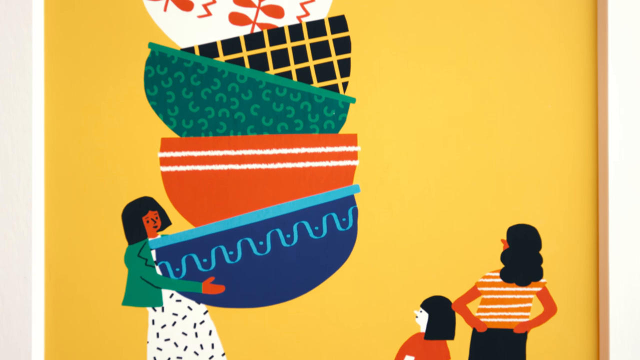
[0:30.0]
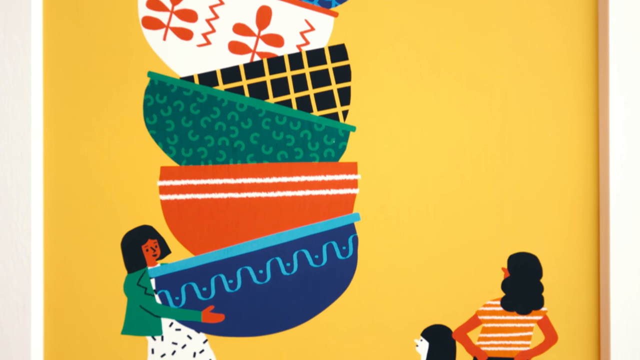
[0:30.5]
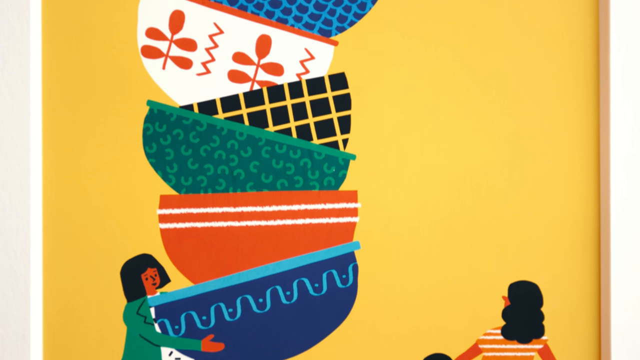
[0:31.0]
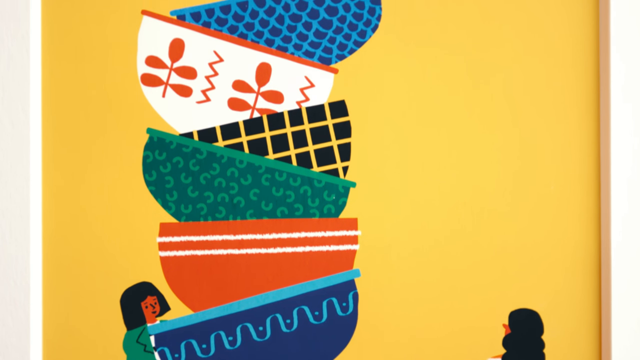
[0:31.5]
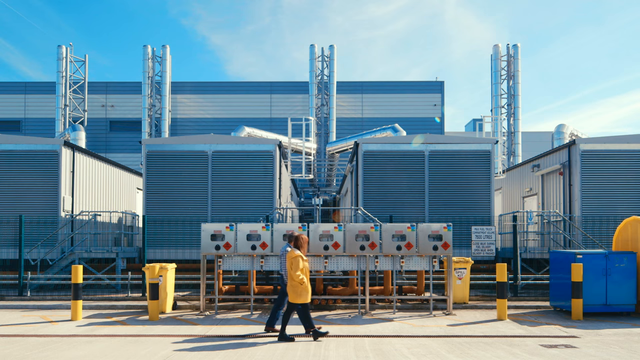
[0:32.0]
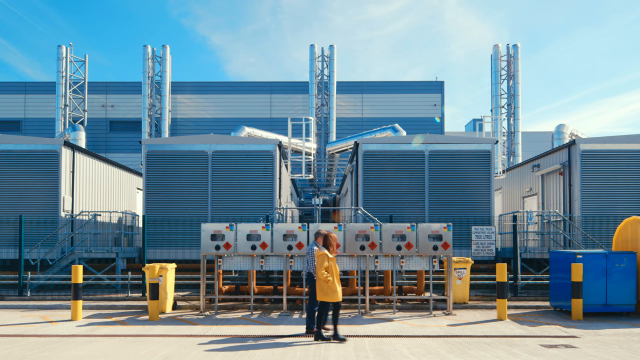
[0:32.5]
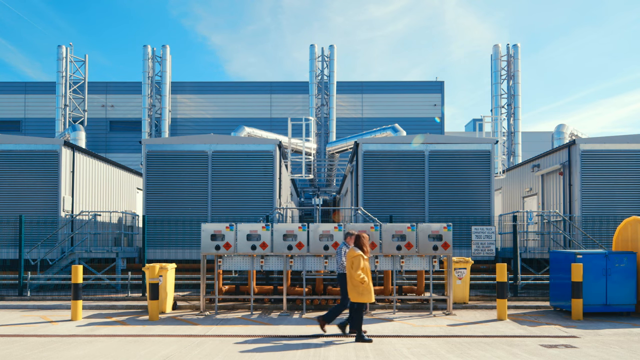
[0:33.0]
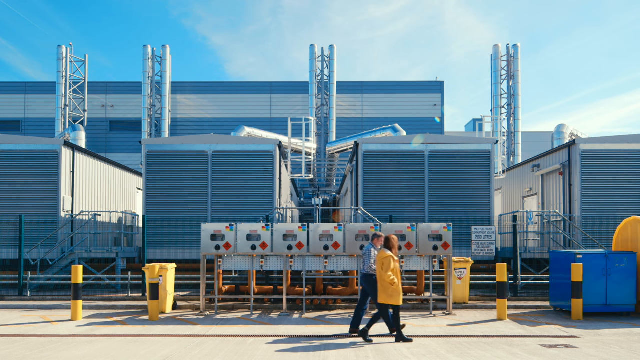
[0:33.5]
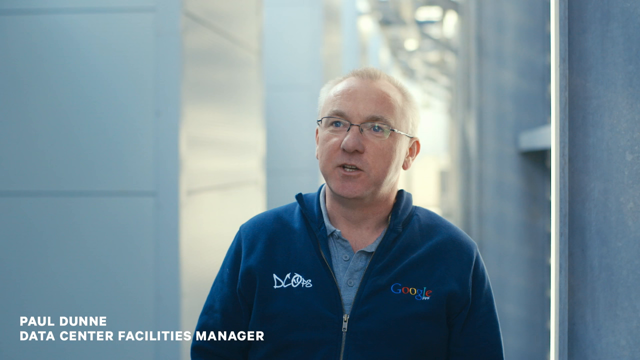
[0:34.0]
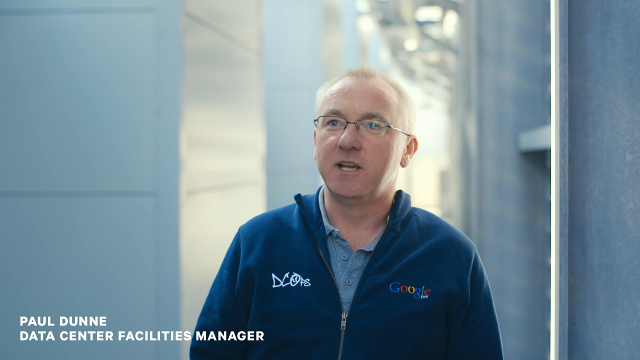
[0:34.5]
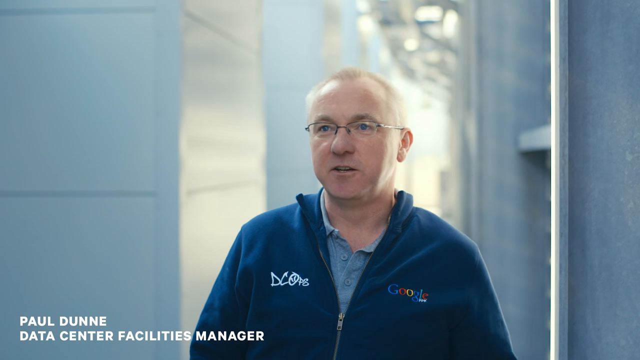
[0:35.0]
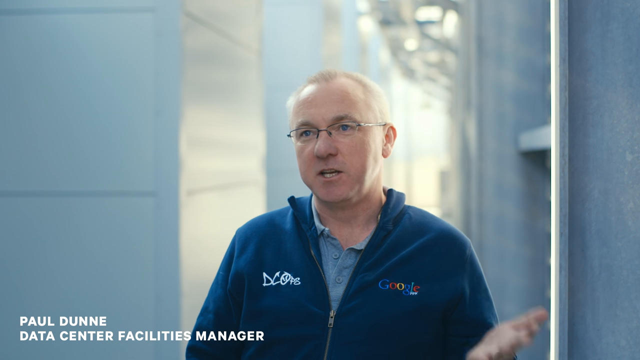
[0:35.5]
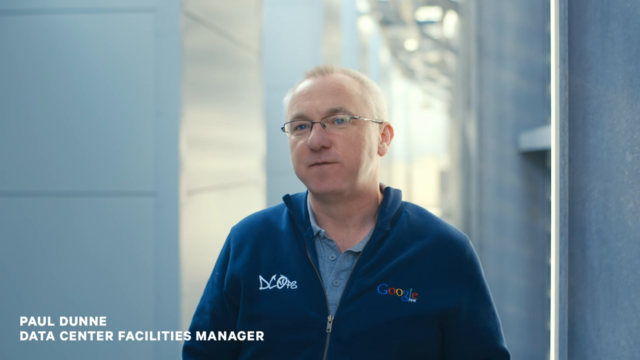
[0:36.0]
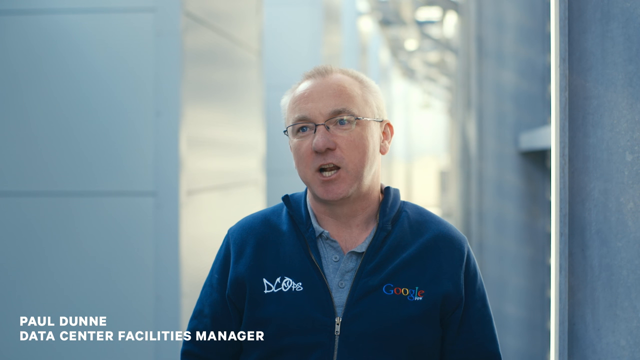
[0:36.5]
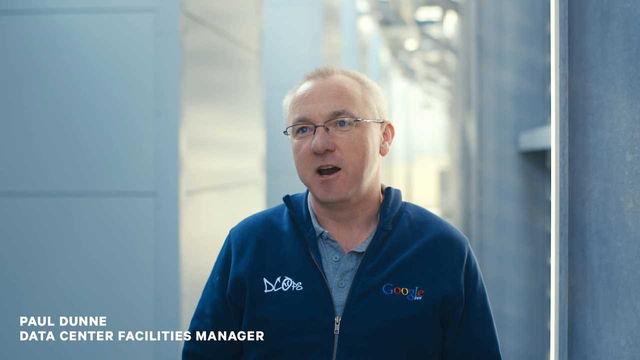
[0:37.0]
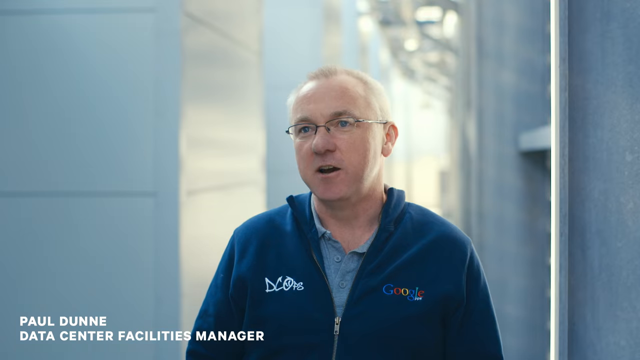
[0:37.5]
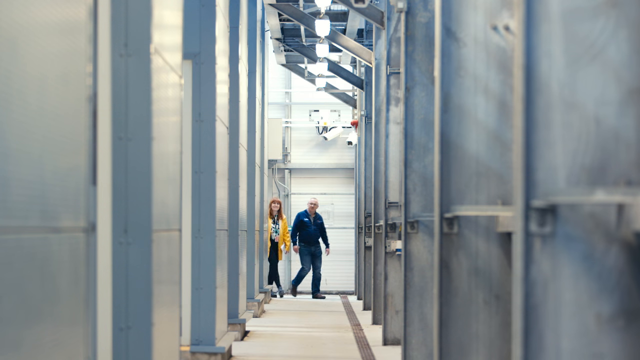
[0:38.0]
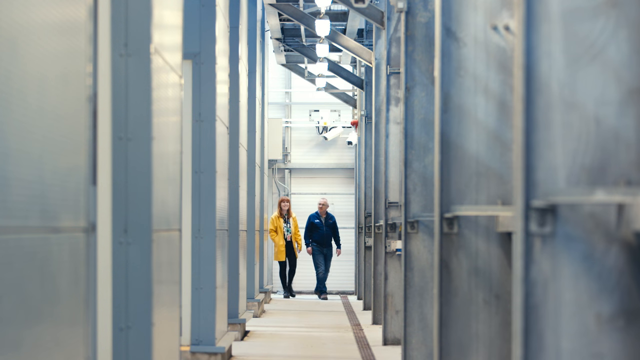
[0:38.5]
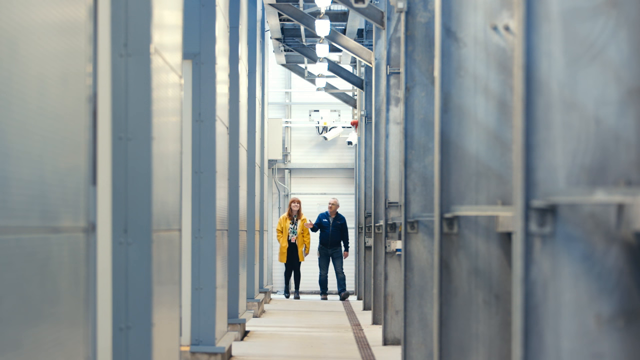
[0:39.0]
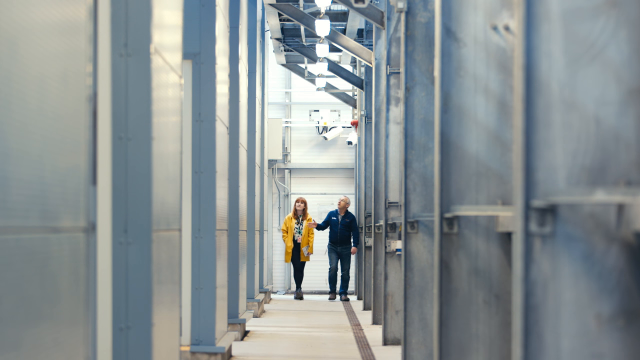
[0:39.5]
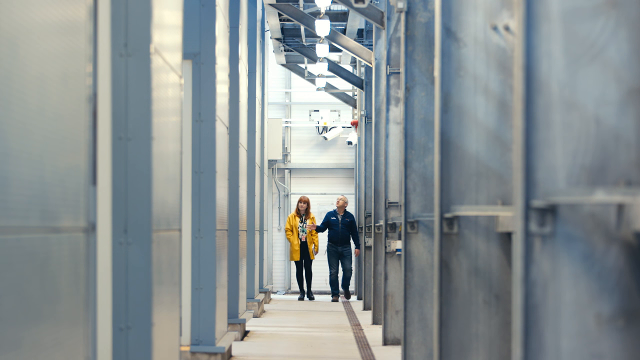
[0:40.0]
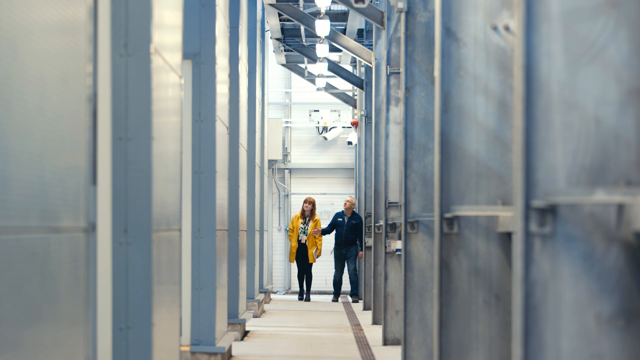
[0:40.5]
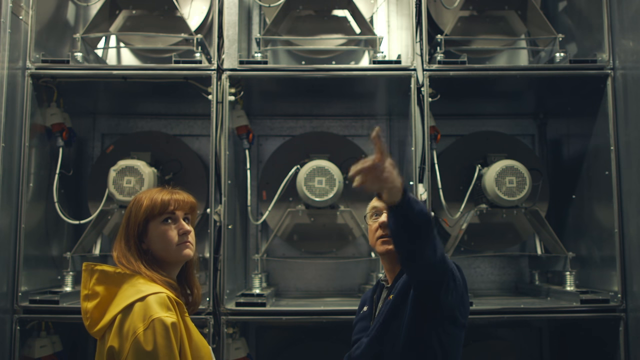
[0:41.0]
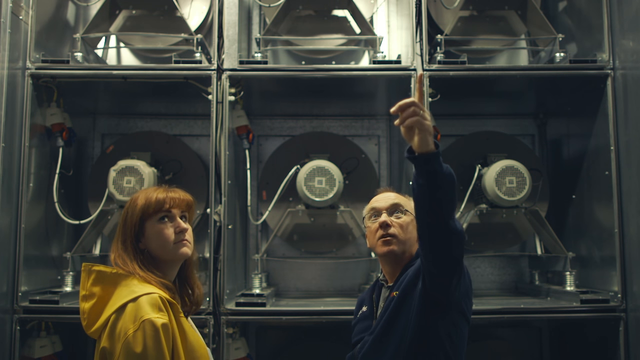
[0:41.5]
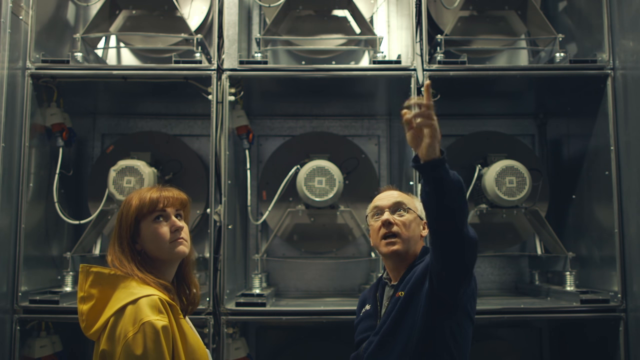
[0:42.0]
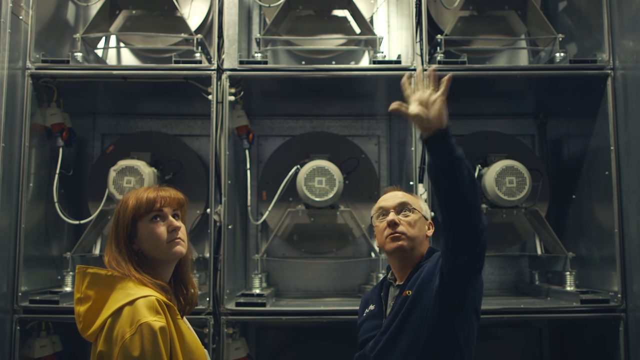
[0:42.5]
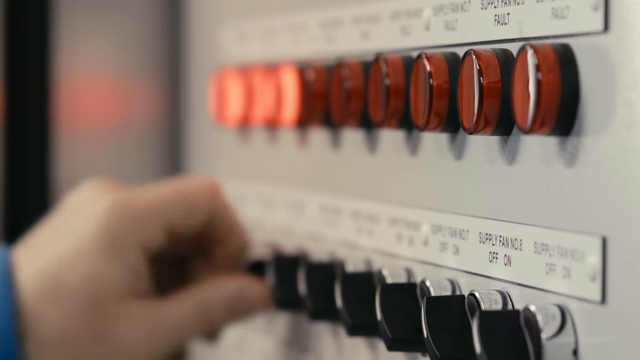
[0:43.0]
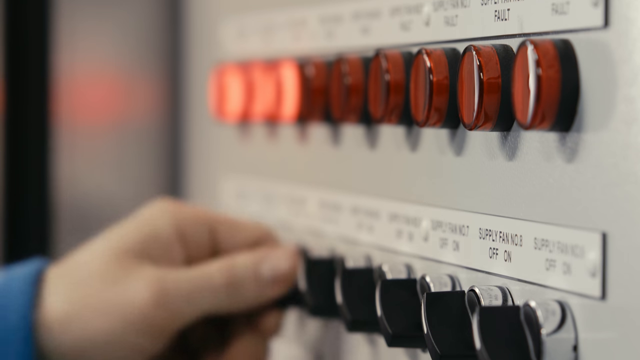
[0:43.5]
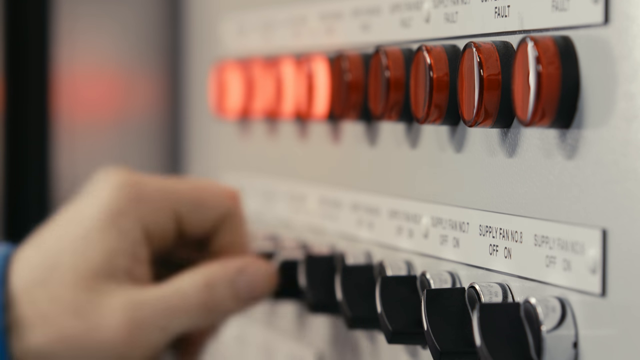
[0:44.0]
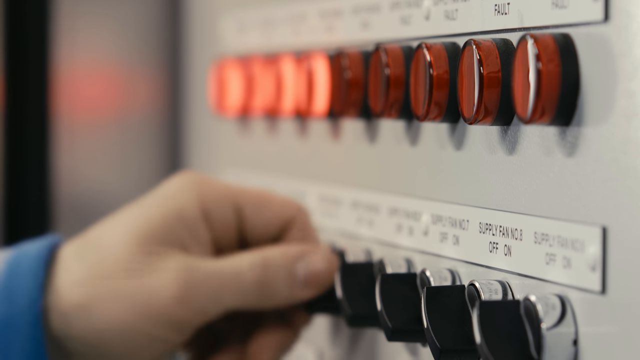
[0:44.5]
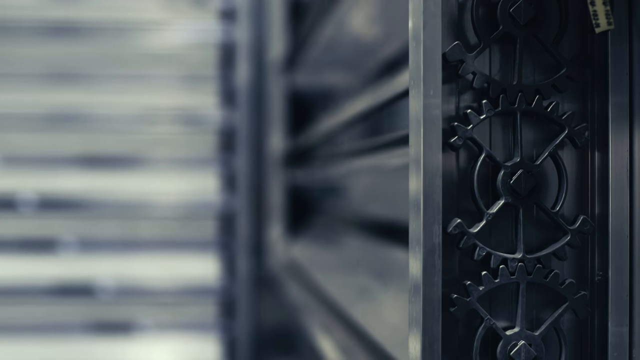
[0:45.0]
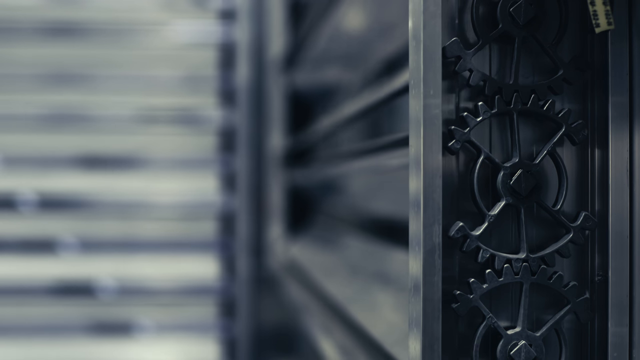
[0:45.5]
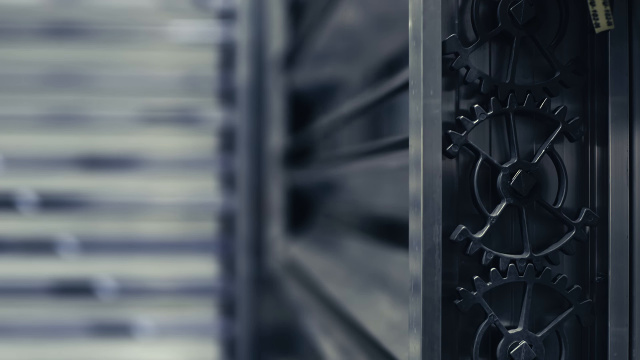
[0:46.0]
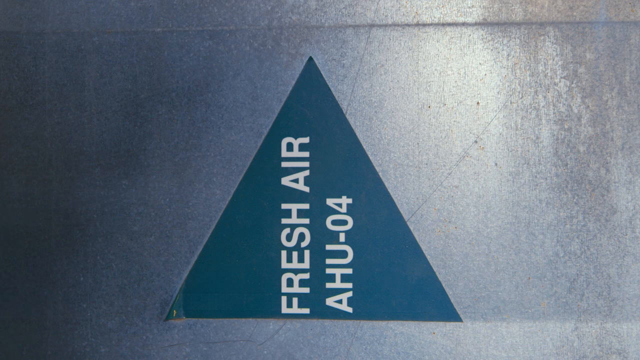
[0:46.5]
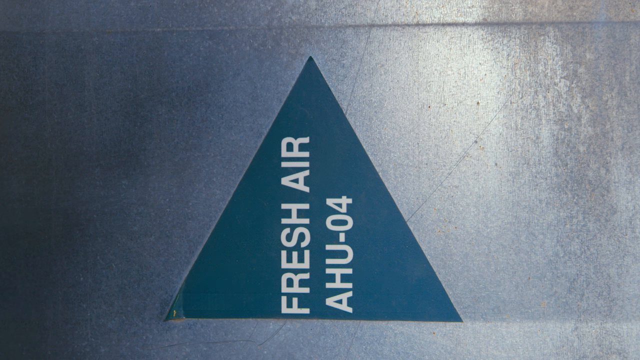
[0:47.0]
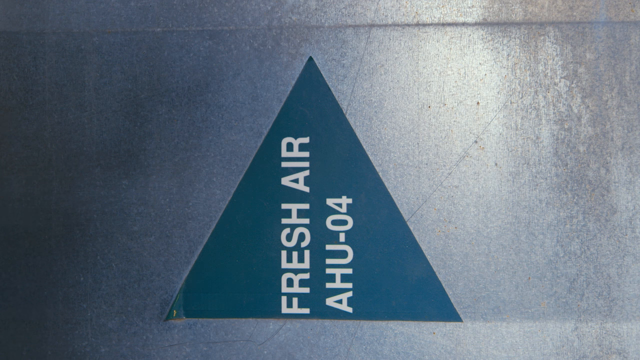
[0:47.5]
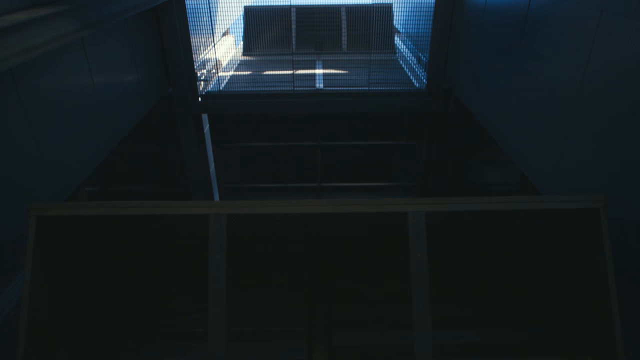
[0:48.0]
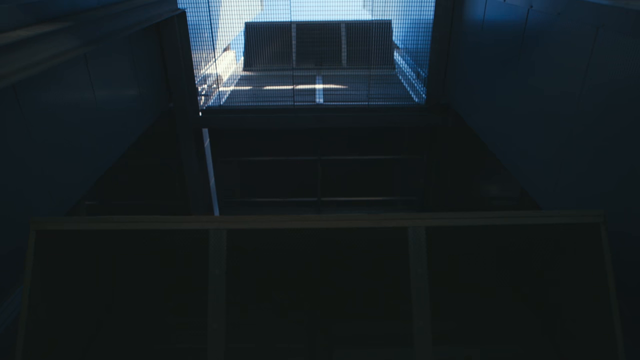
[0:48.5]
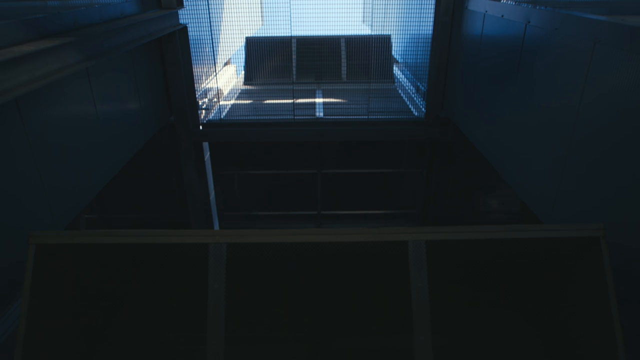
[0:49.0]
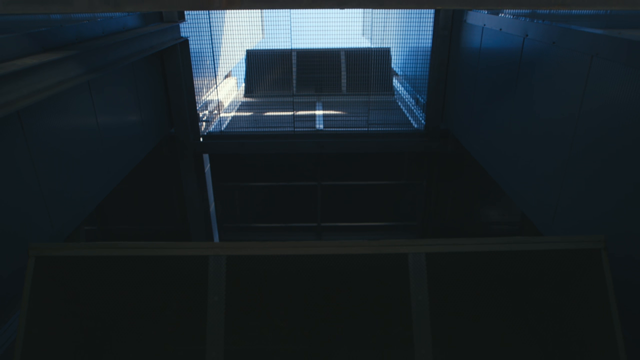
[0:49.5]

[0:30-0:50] The woman in the artwork has a short hairstyle that reaches just beyond her jawline and is almost balancing the stack of bowls. The painting appears to have been made on an iPad. In the artwork, someone is watching the woman hold up the stack of bowls. The artwork transitions back to Fuchsia, who appears to be walking with a man inside the building that was earlier shown only from the outside. They are shown in right profile, walking toward the right. It is an industrial building with machinery and what look like tanks. The man, named Paul Dune, wears a blue jacket and shows her around, pointing out the buttons and configuration. An arrow says "fresh air", and on the chest area of his jacket the text appears to say "the Google". Fuchsia is still wearing the yellow raincoat.